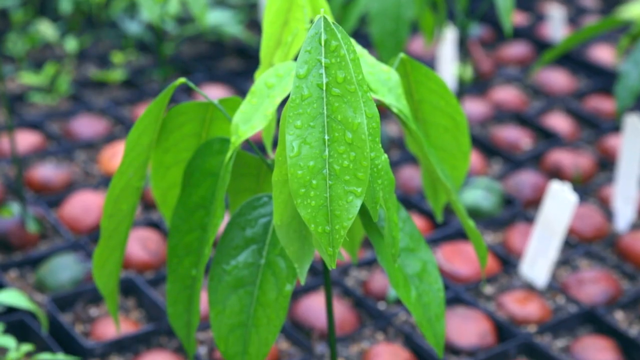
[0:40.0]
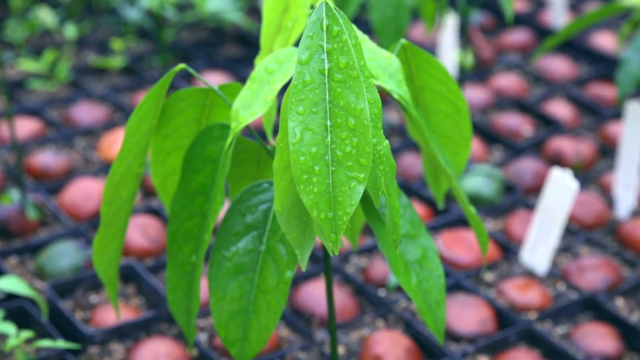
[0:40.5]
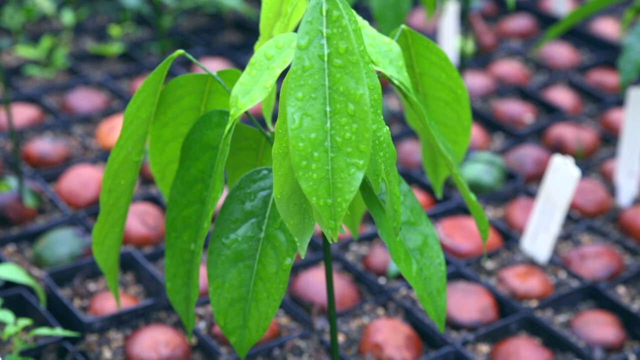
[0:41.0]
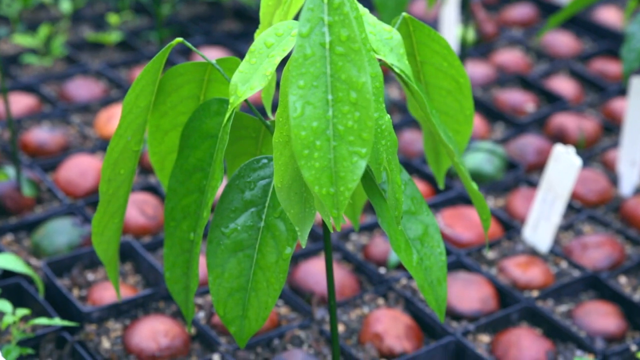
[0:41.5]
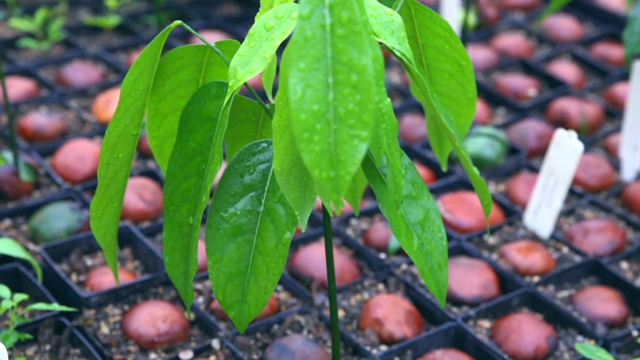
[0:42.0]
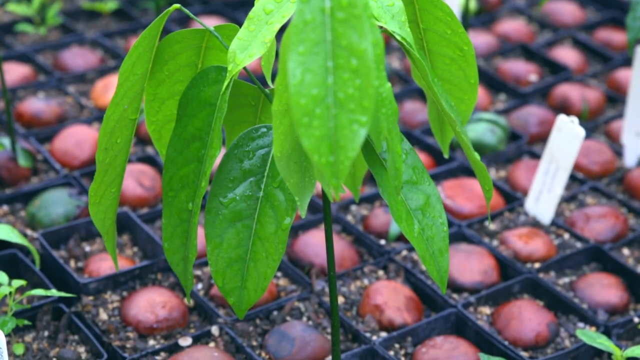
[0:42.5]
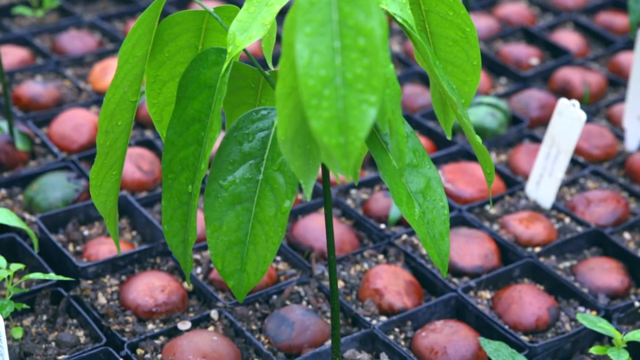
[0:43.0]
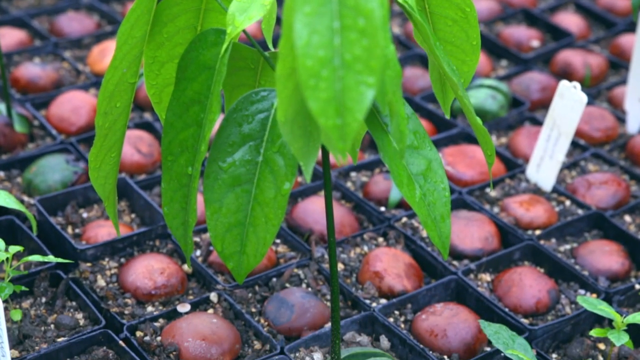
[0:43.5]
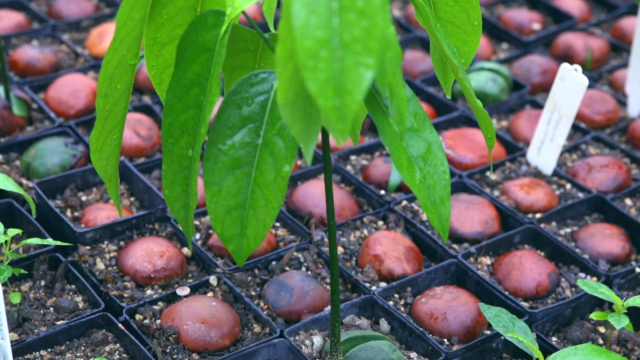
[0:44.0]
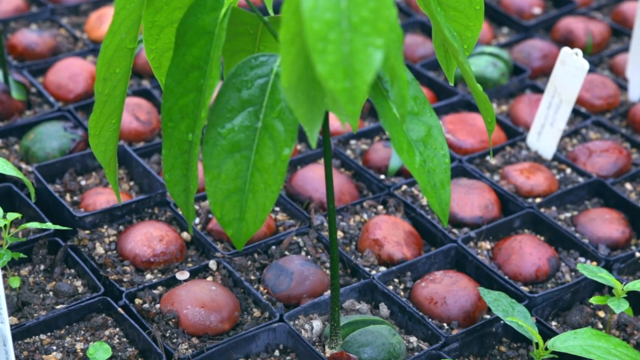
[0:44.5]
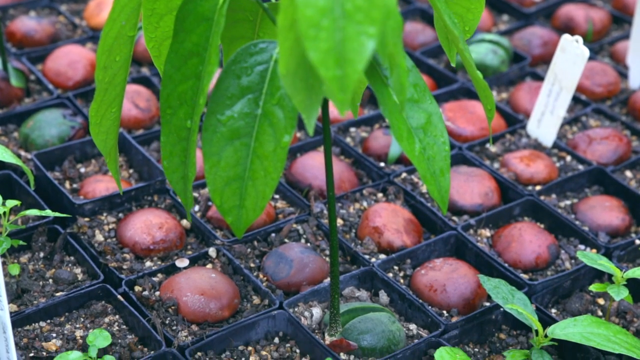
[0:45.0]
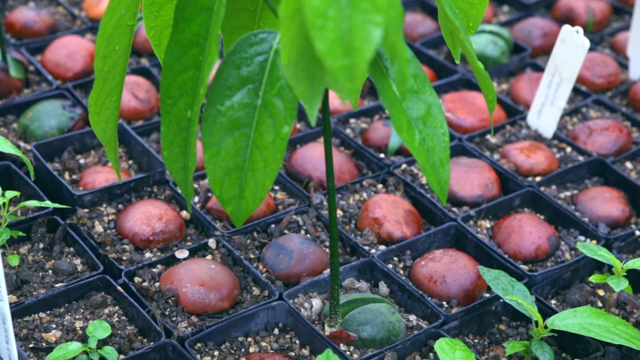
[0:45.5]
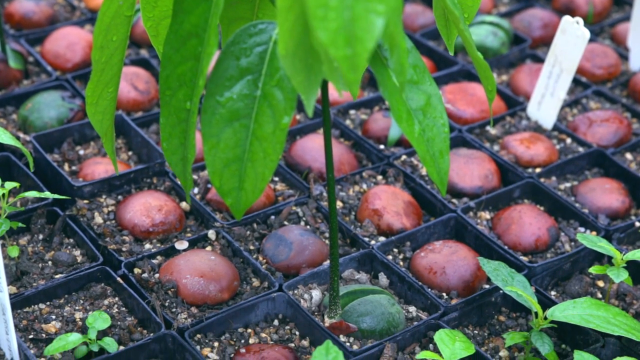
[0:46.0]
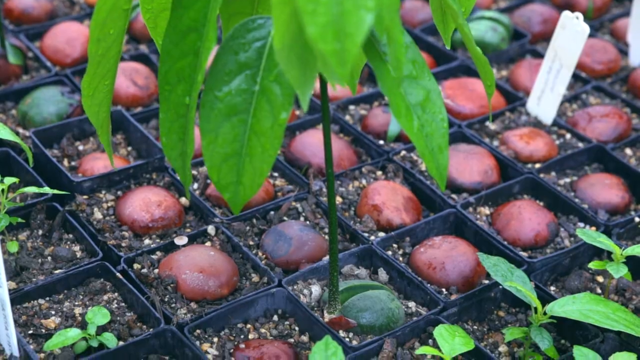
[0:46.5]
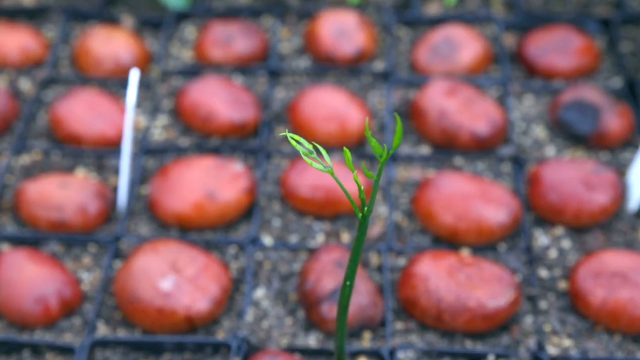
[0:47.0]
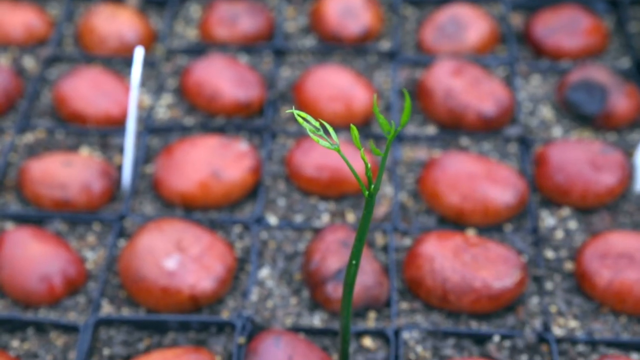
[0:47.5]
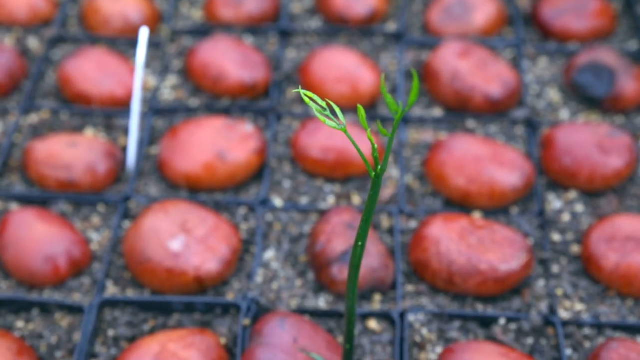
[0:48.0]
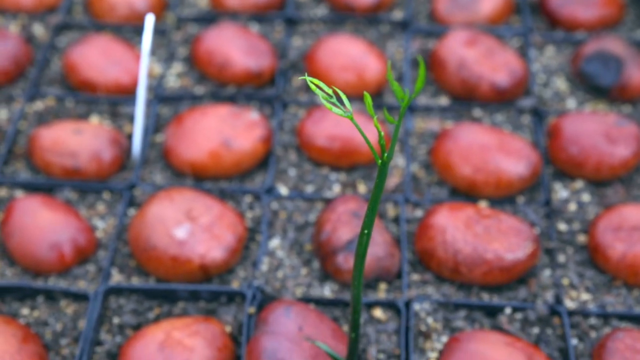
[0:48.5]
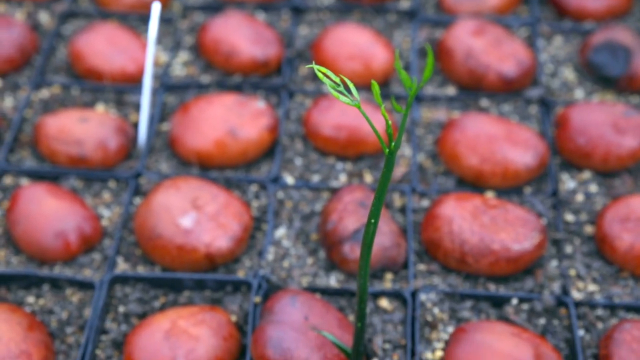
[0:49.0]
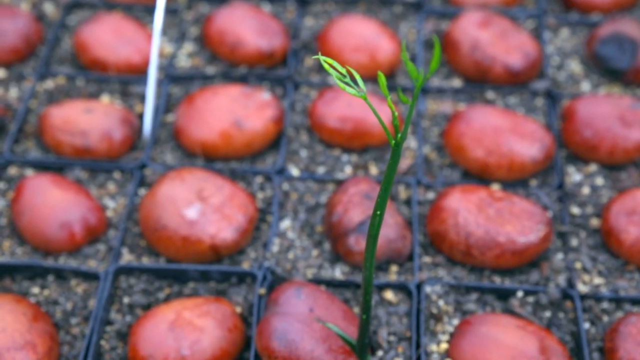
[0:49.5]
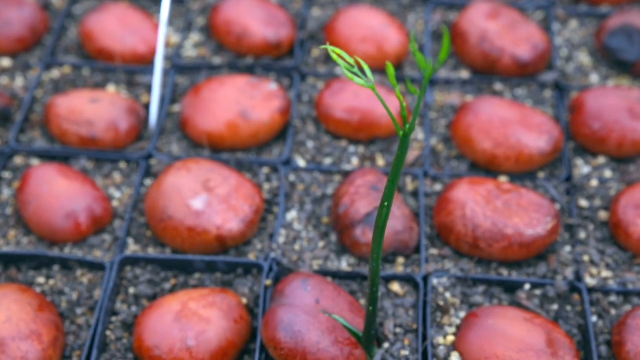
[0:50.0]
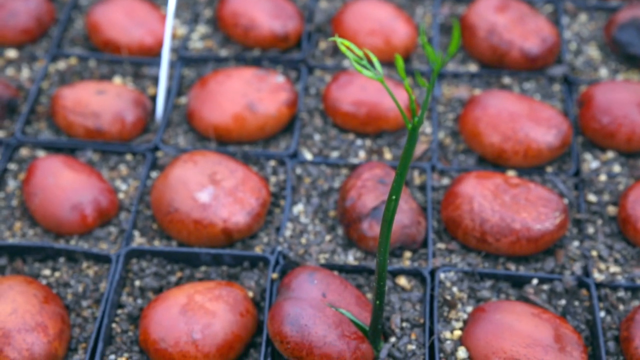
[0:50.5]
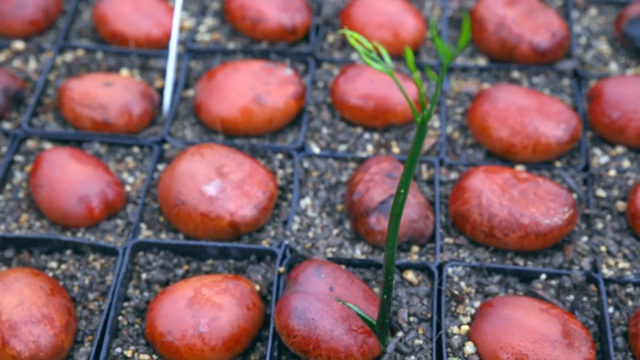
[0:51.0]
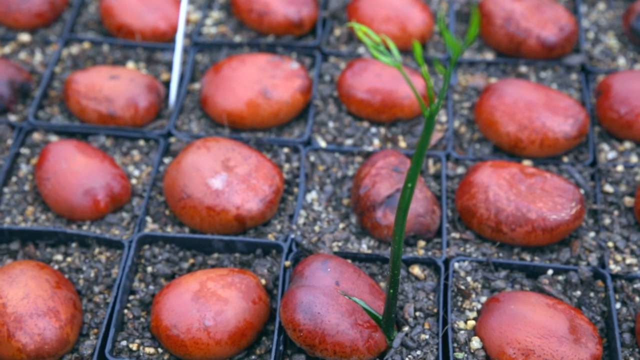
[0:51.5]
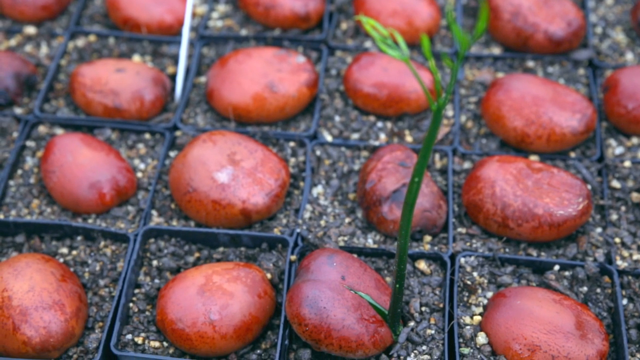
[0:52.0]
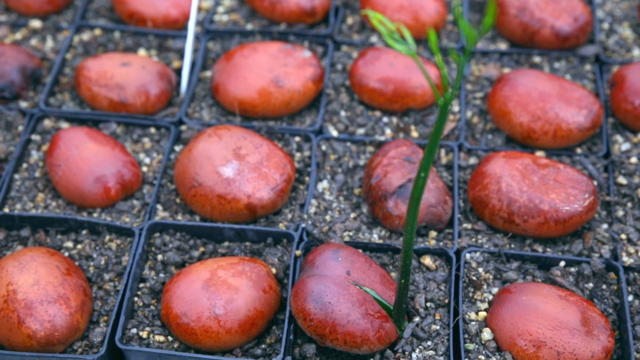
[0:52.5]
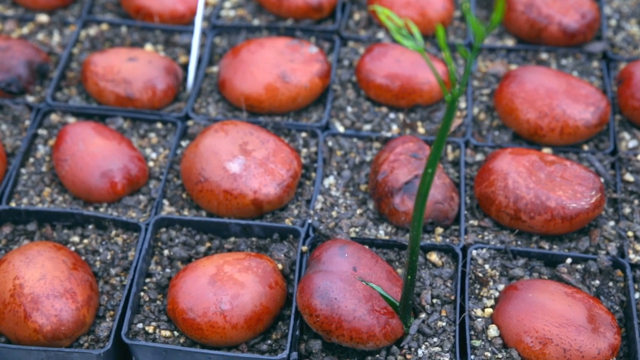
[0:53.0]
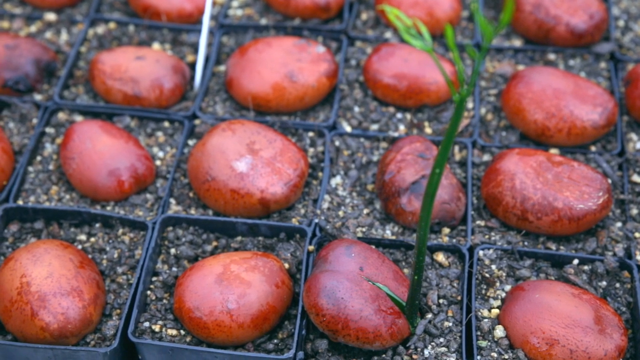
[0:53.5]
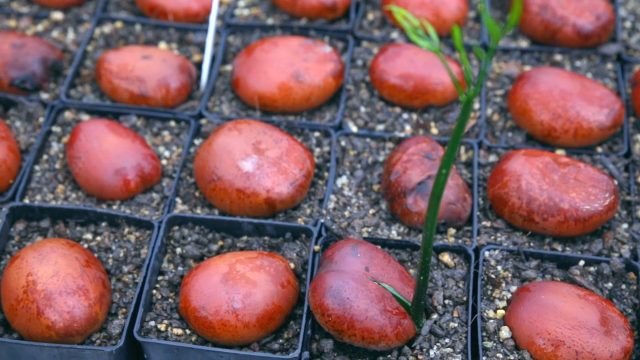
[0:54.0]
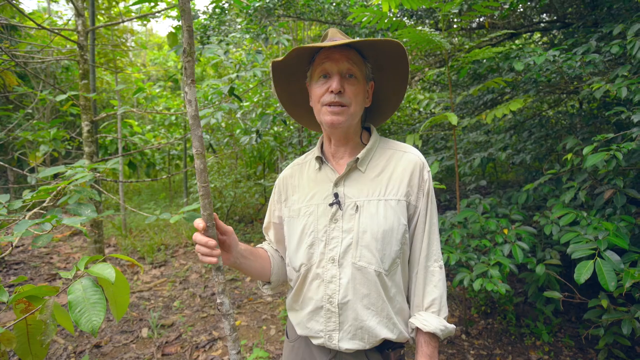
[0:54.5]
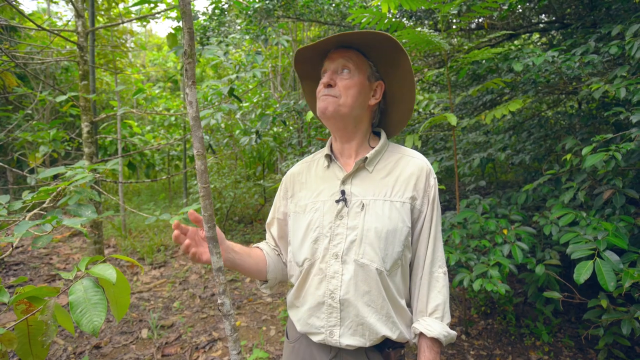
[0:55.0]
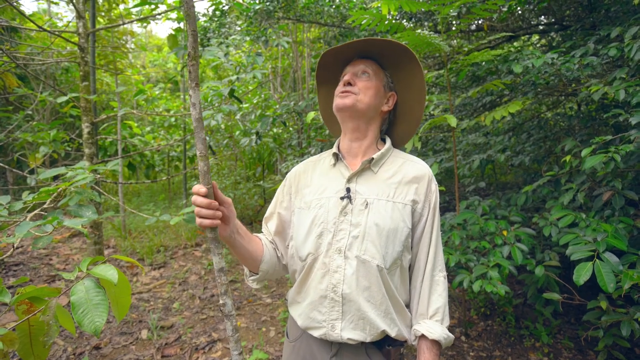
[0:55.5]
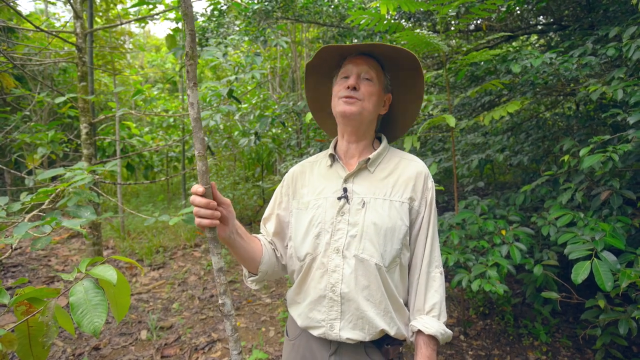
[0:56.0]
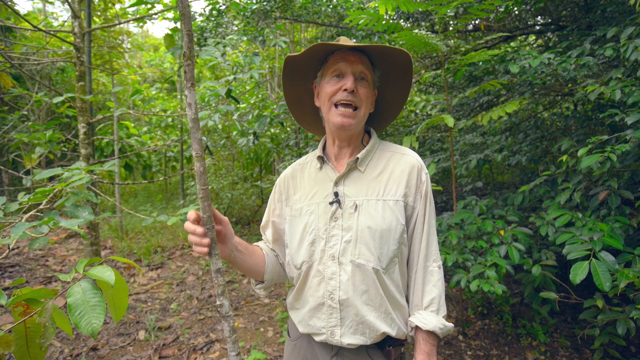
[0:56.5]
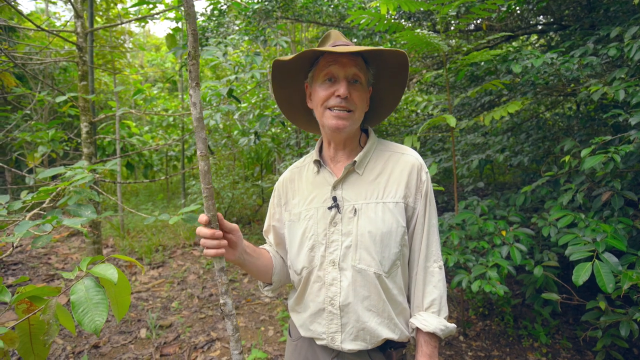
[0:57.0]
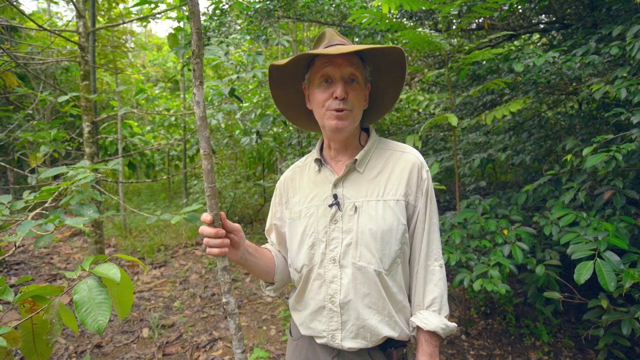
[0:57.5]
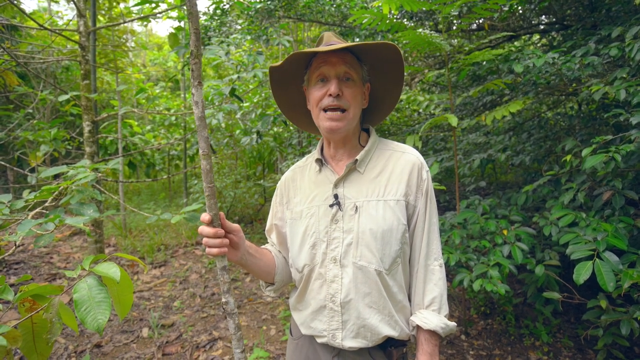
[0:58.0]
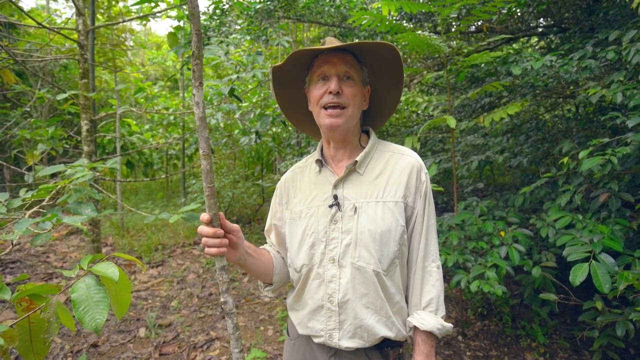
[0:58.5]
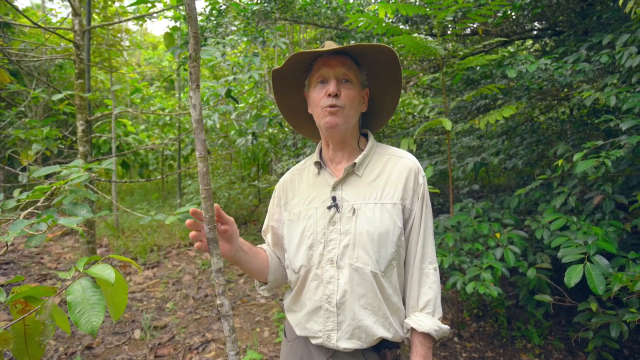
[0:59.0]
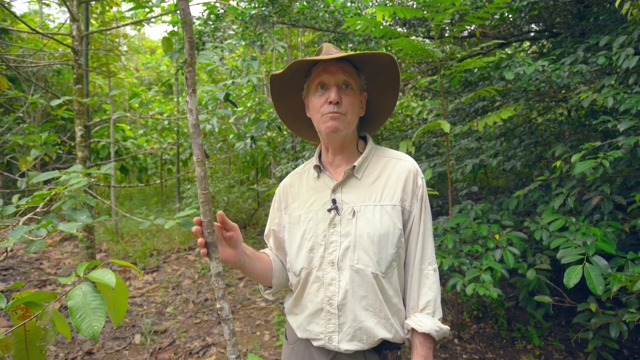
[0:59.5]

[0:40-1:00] Many very small containers are arranged like a tic-tac-toe board, with 20 rows going down and 20 going up. Inside each is a small brown bean about the size of a quarter, lying on top of the soil. A green plant grows up out of one of them, with a solid green stem topped by very long leaves that bend over. The video cuts to a man standing in a forest, holding a small tree with his right hand. He wears a light tan button-up shirt with the sleeves rolled up to his elbows and a light tan cowboy hat, and he speaks to the camera while looking up at the tree he is holding. Behind him is a very dense forest filled with trees with green leaves.